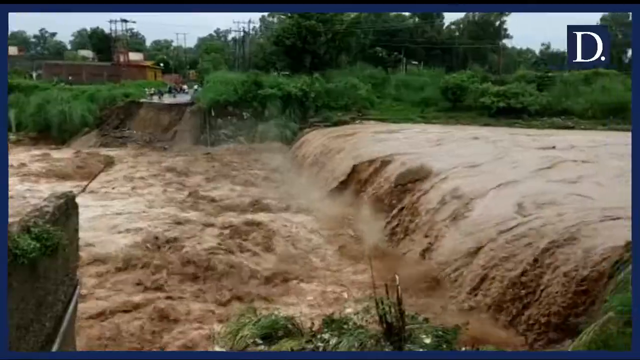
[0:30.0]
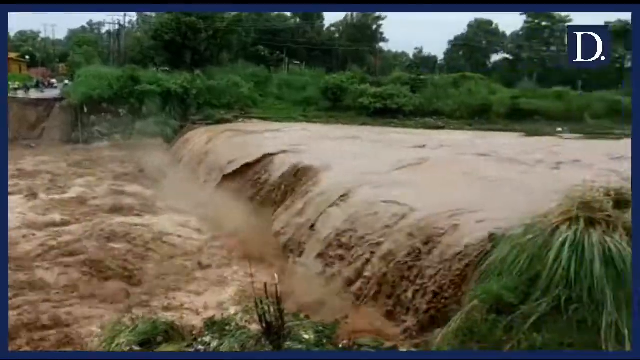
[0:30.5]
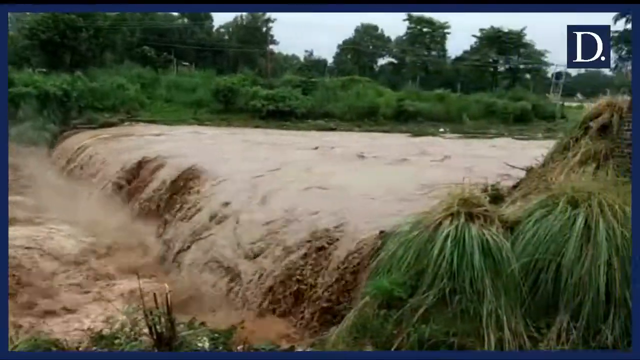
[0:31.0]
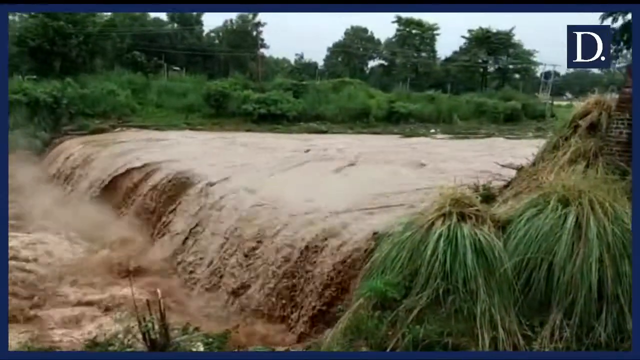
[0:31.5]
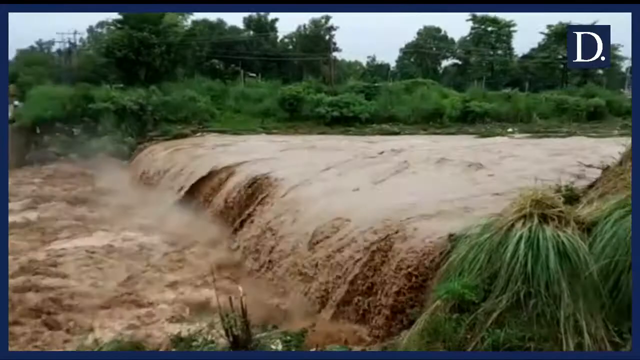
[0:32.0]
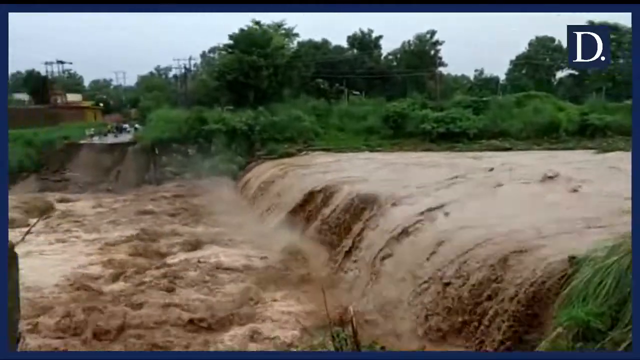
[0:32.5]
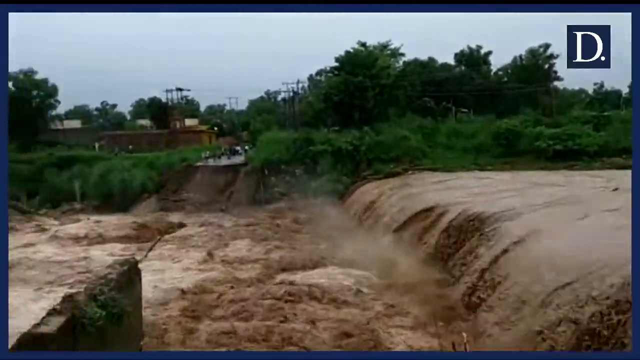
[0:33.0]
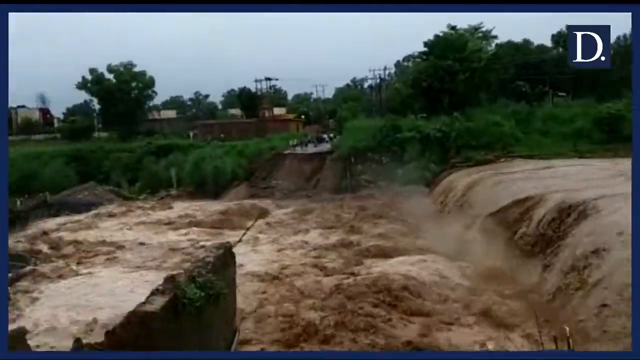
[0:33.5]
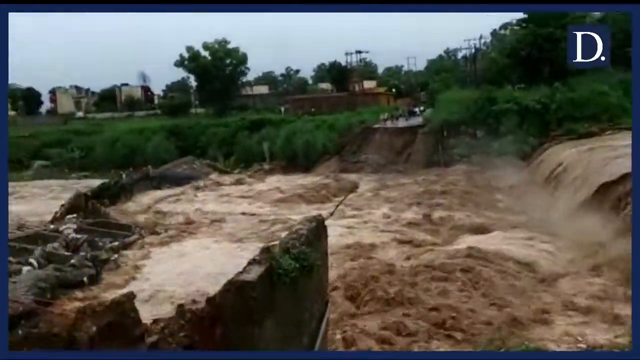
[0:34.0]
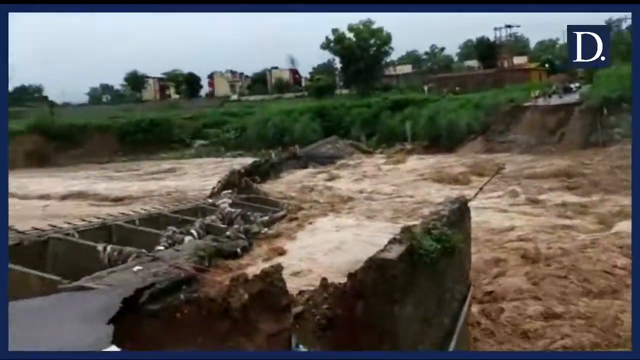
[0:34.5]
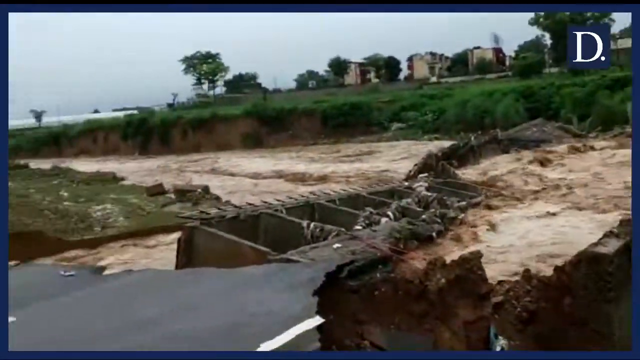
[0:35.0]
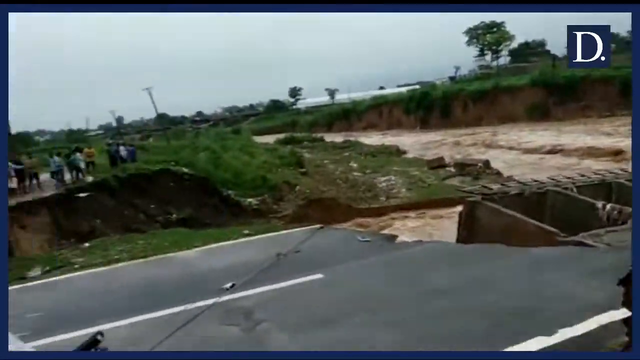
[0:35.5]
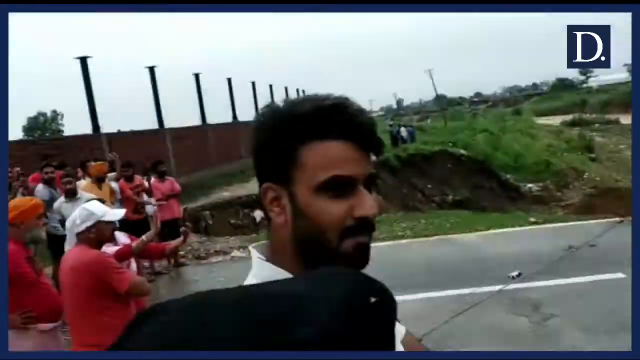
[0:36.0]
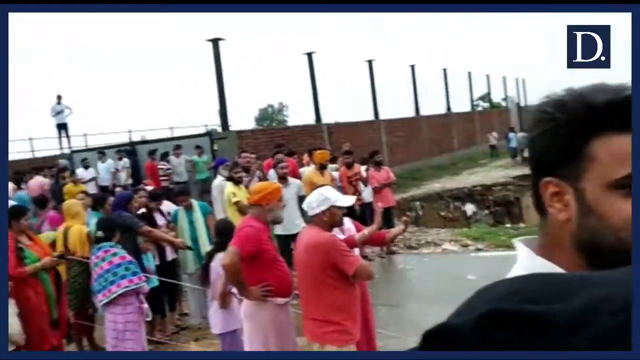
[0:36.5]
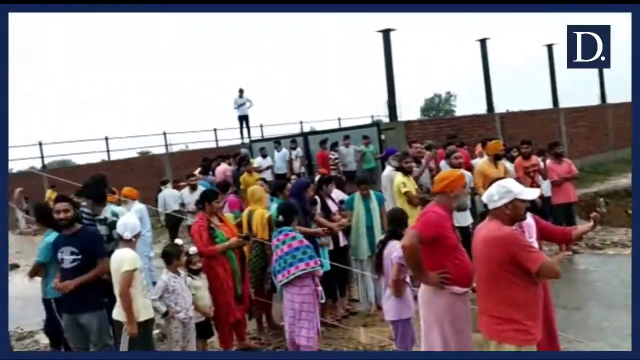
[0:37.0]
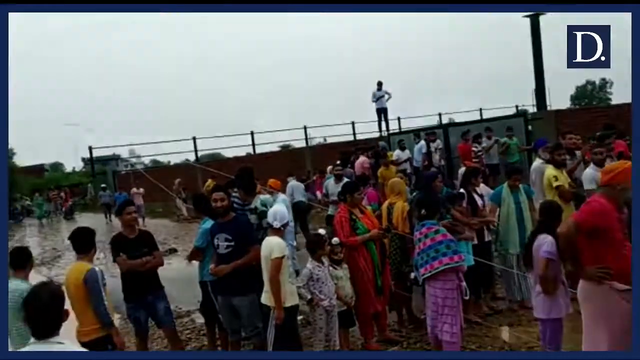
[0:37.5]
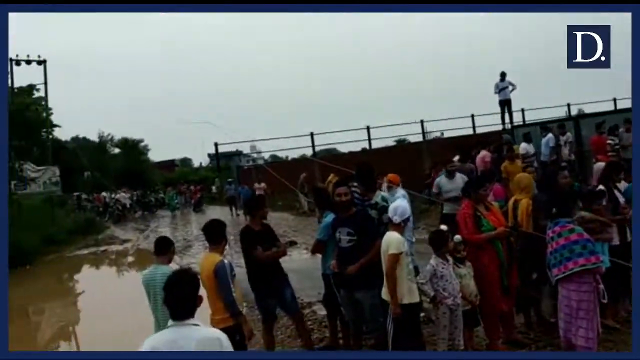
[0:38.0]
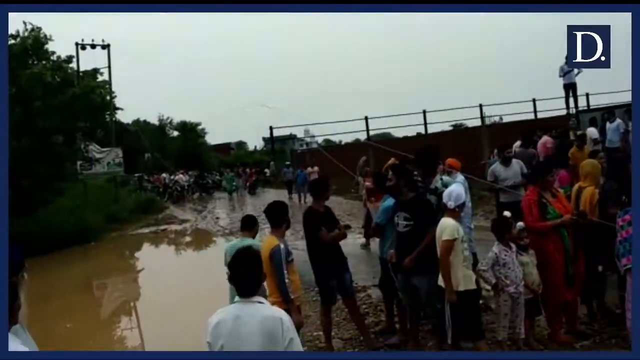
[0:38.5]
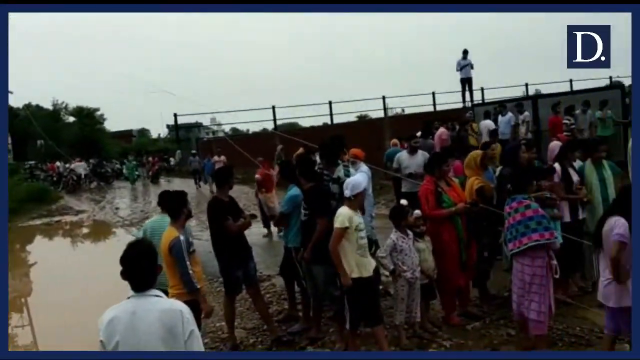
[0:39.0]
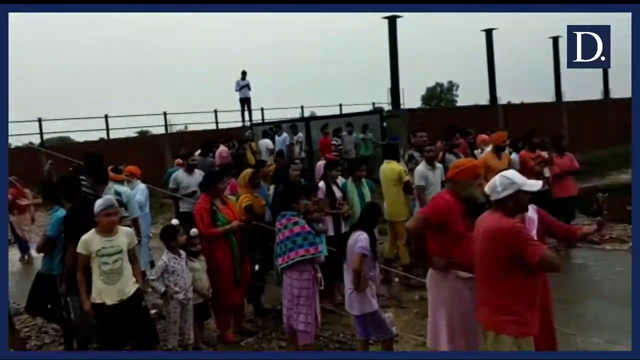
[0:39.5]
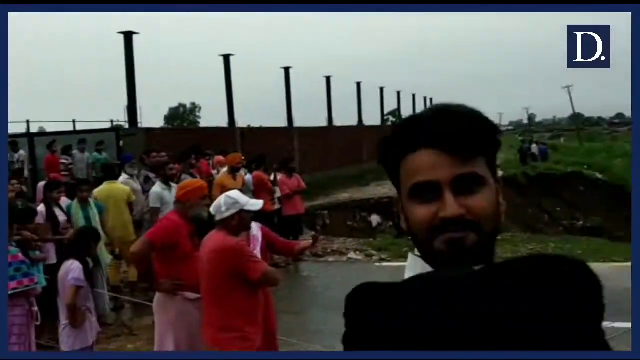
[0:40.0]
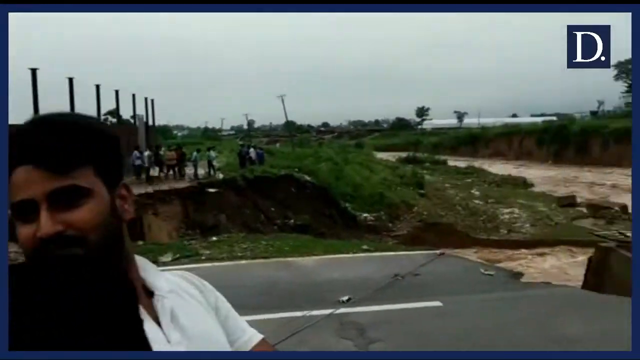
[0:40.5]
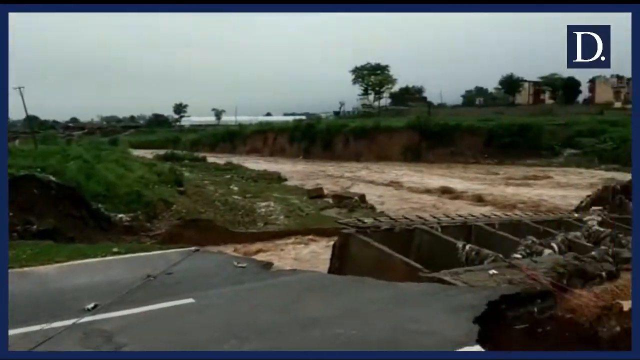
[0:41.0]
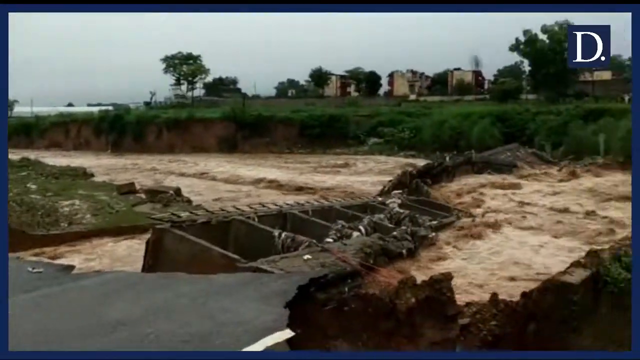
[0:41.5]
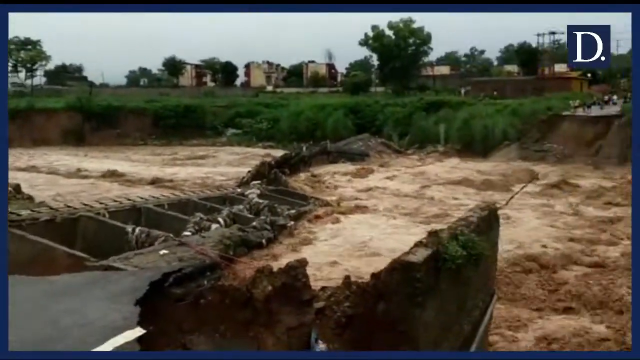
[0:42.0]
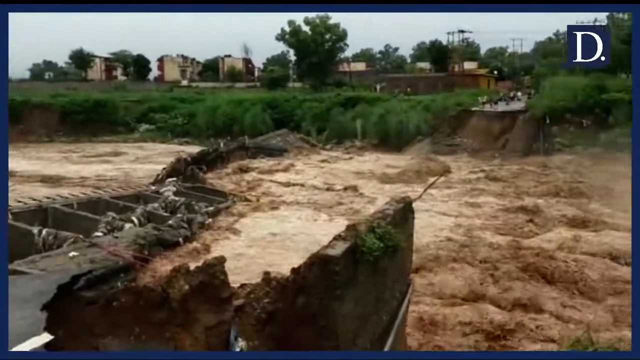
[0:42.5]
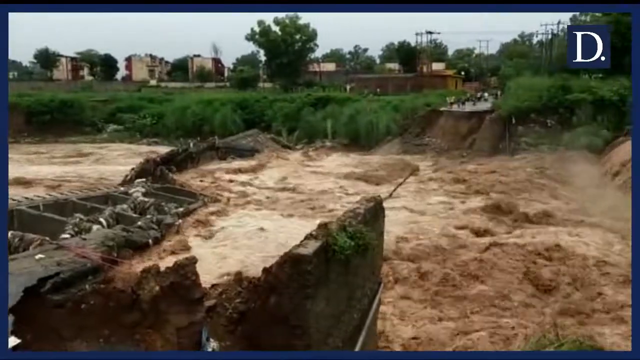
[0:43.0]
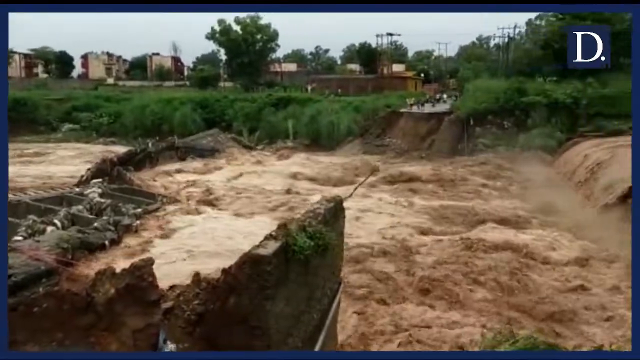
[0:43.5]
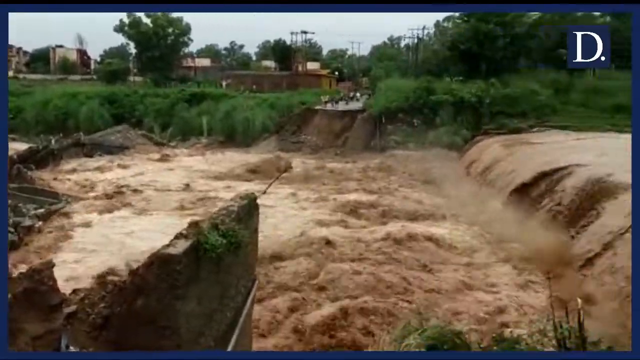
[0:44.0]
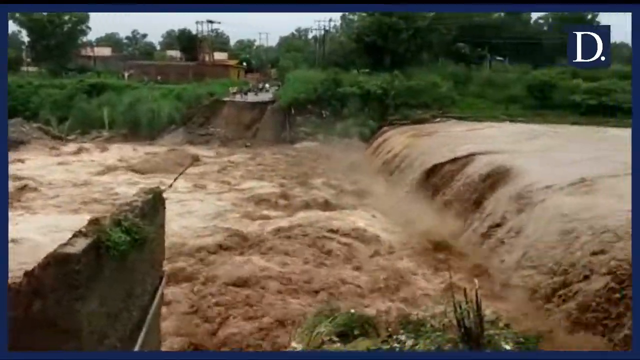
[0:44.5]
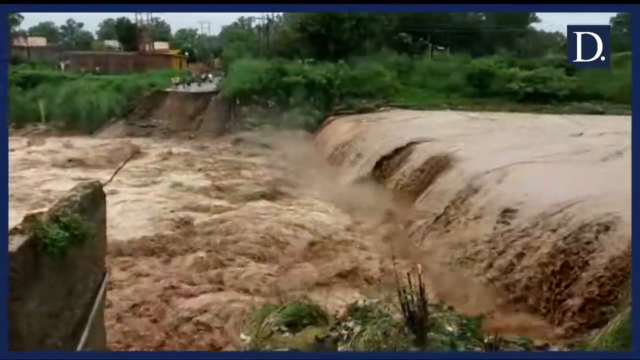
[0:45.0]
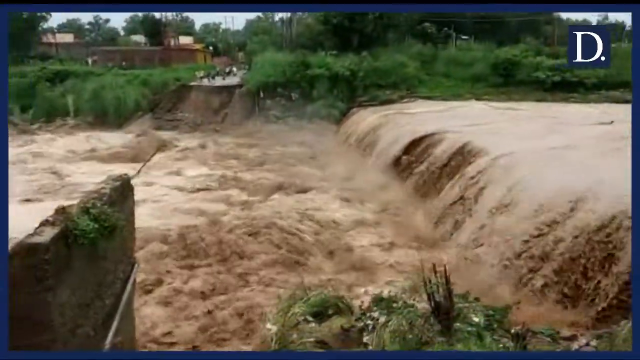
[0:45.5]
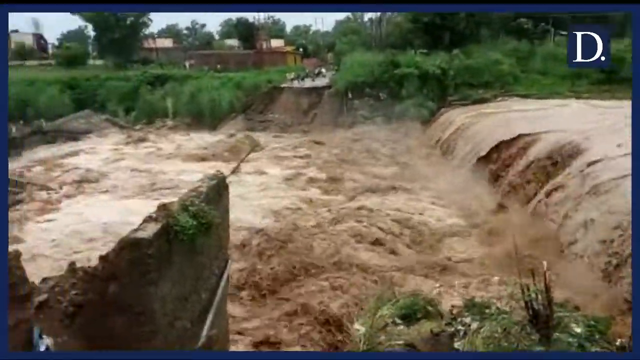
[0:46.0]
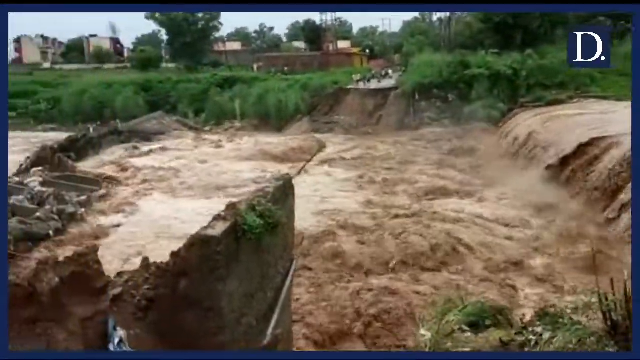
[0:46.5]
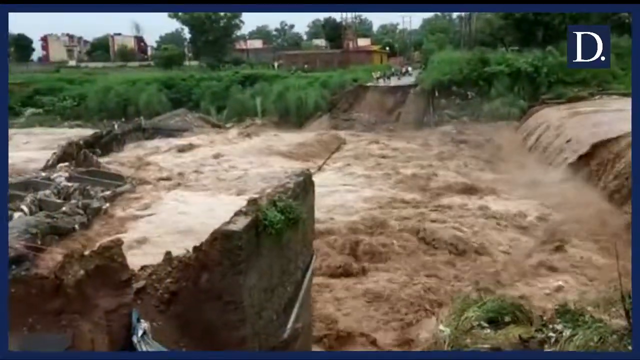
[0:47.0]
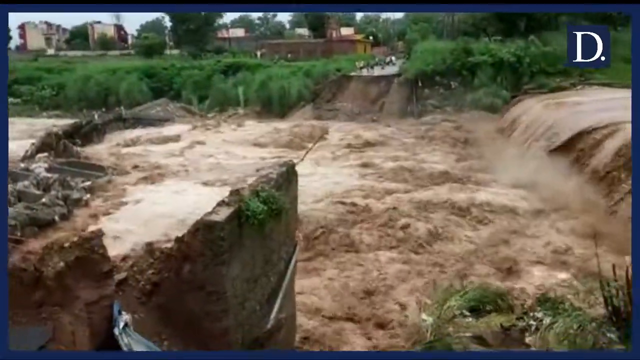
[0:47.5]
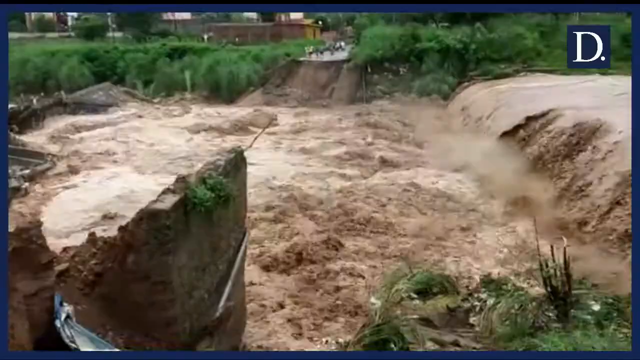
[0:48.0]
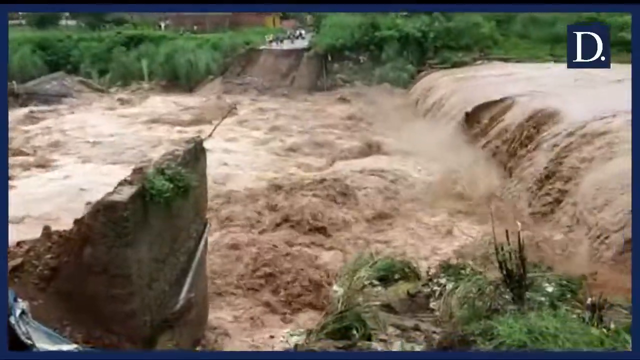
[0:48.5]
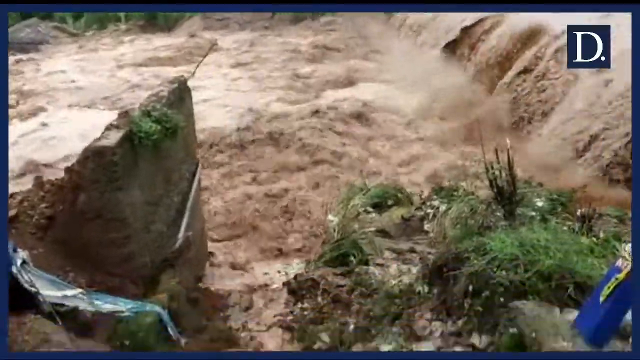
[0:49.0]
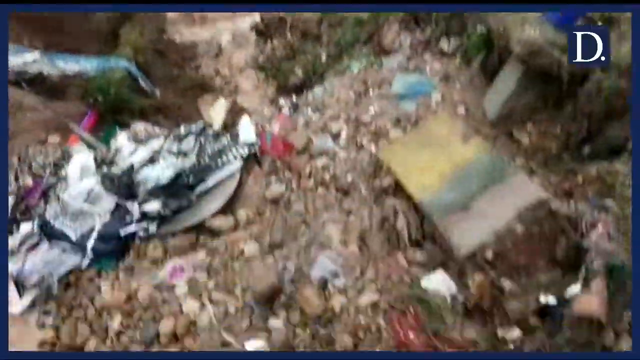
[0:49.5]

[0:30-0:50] The river continues in high flood, the water moving very quickly, very high and brown. On either side of the river are tall grass and shrubs, with tall trees in the far distance. There is a stepped section where one part of the river drops into a lower part. The water has hit a road bridge and destroyed it into two segments; the top segment has fallen into the river, split apart into two more sections, and travelled several meters before stopping. The flood water continues to move at speed. The camera then pans to a large crowd gathered to watch the destruction and the flood, possibly in India. Another group of people is on the far side of the river.